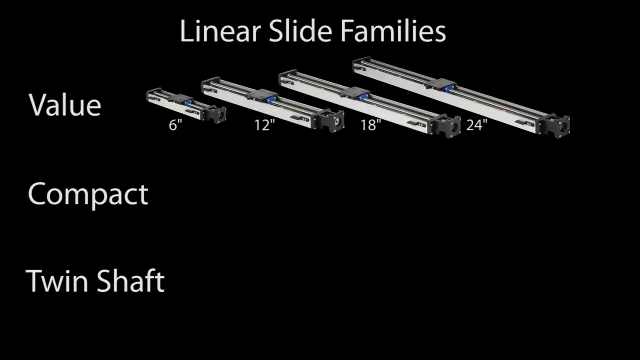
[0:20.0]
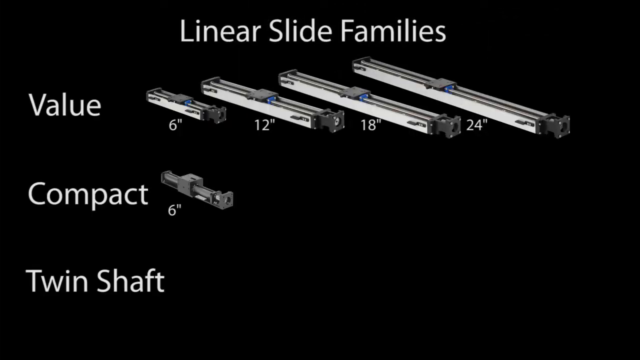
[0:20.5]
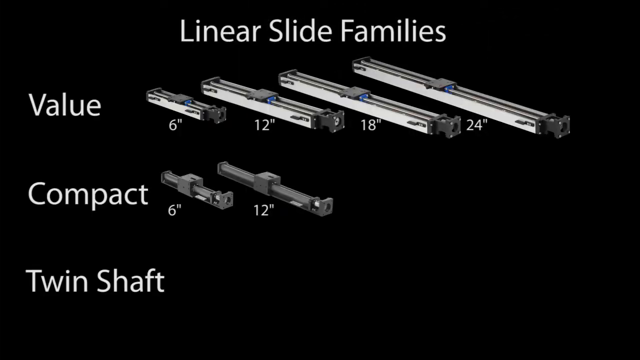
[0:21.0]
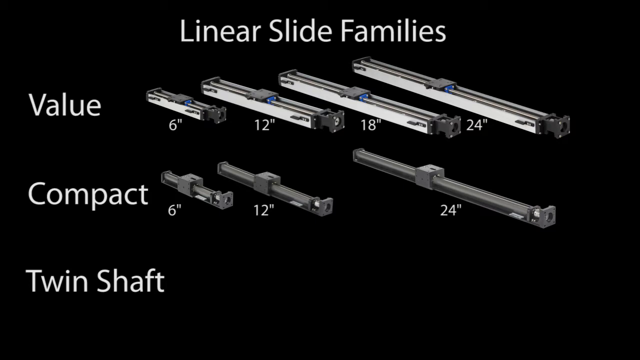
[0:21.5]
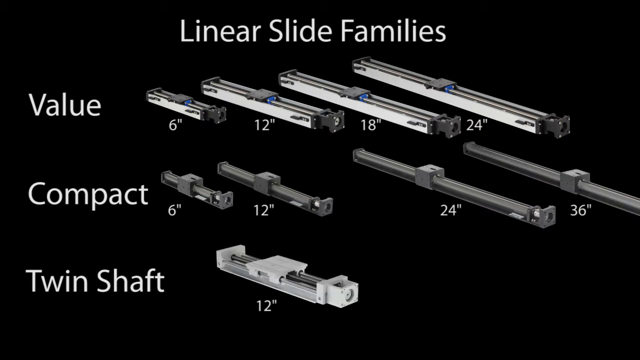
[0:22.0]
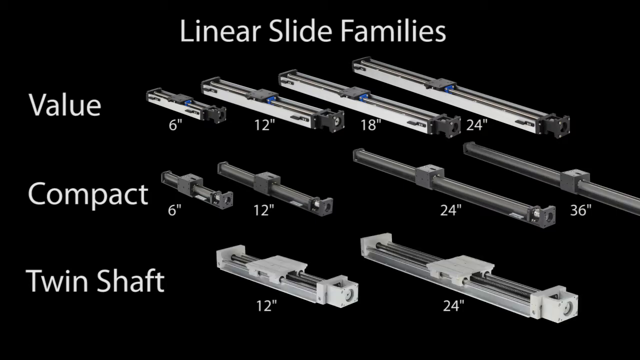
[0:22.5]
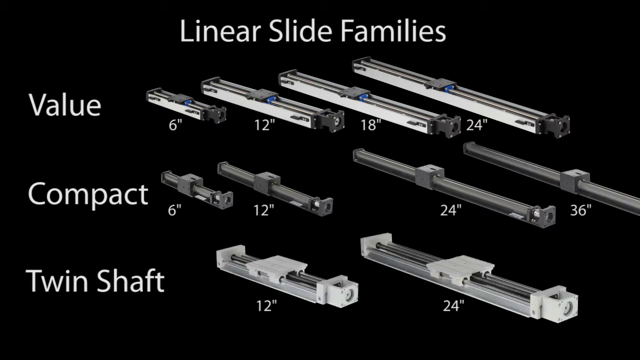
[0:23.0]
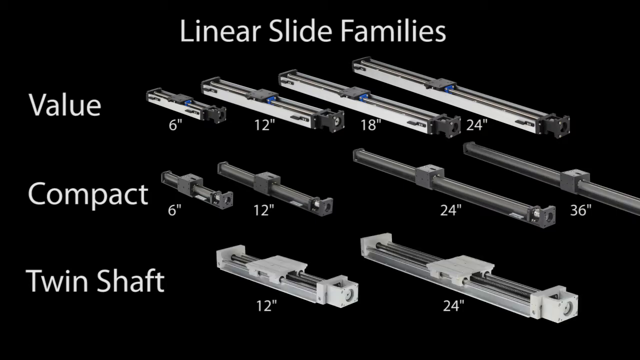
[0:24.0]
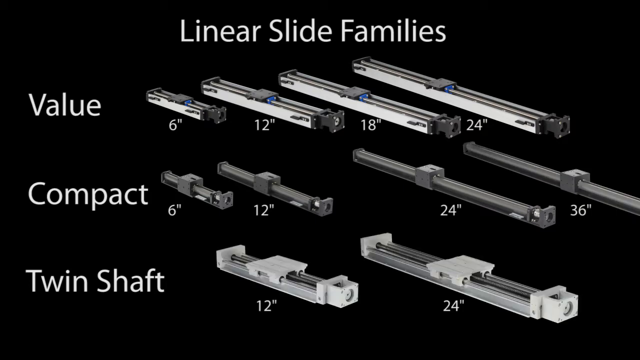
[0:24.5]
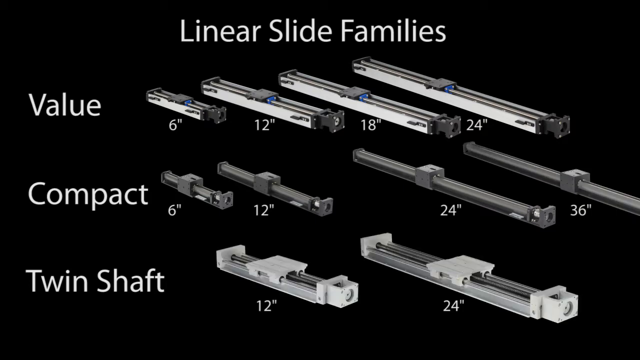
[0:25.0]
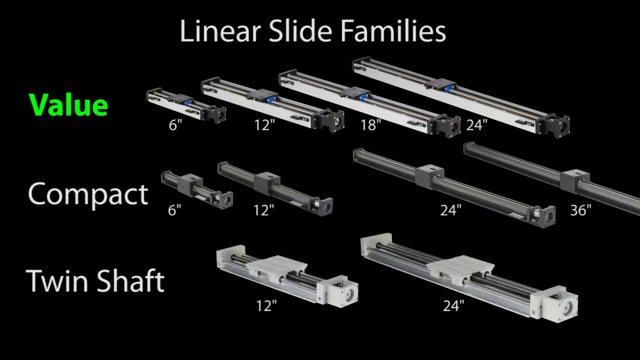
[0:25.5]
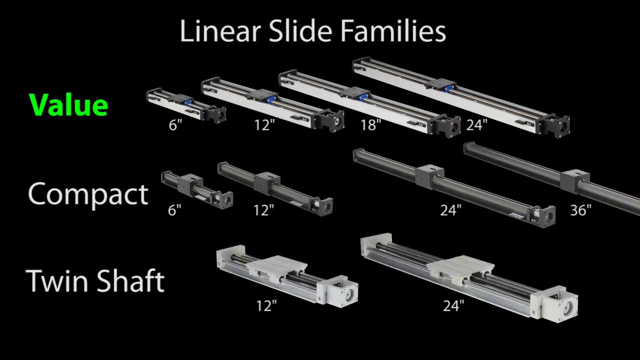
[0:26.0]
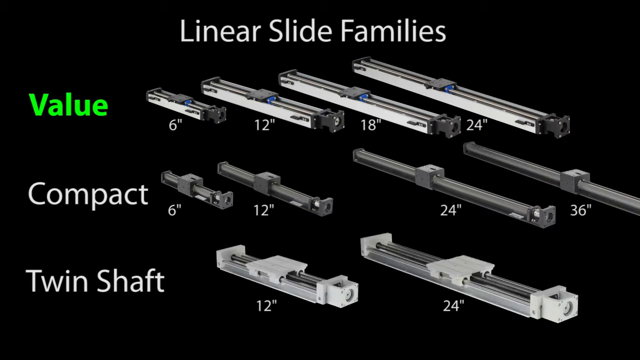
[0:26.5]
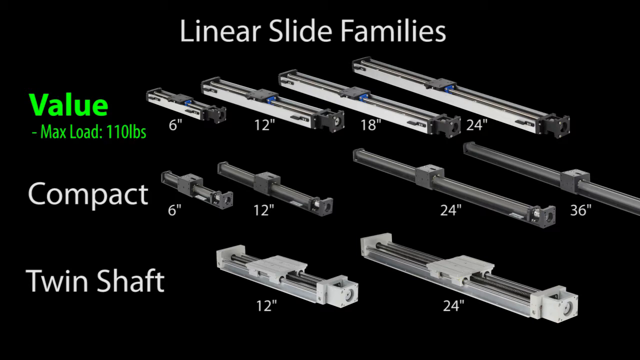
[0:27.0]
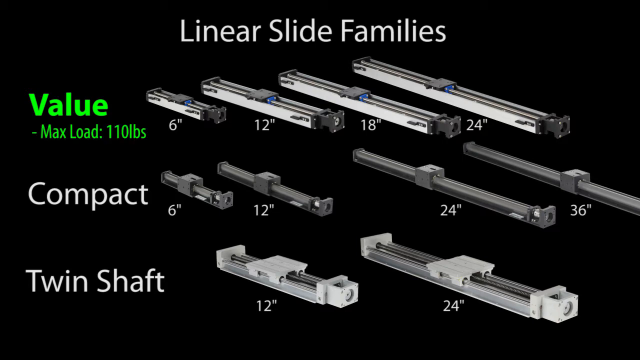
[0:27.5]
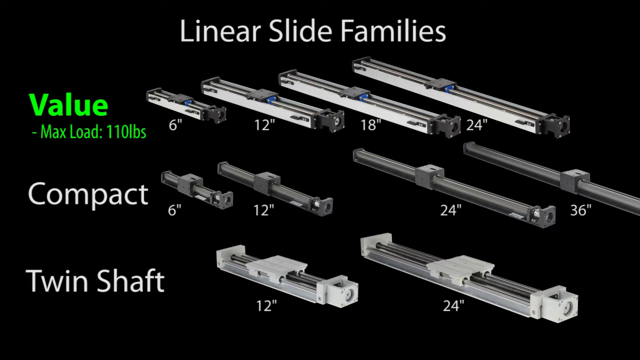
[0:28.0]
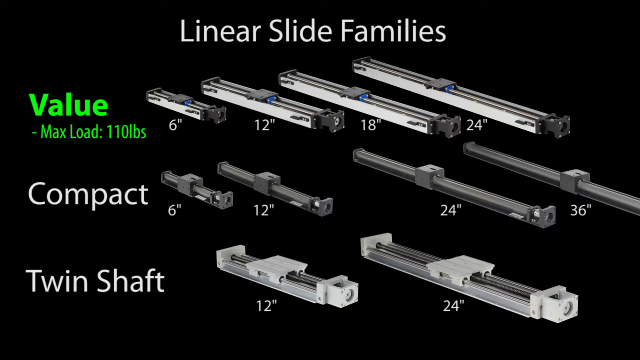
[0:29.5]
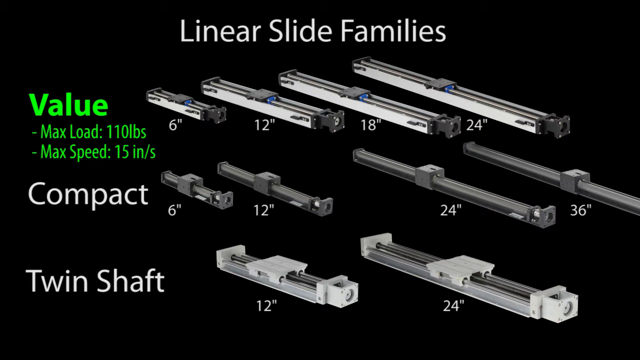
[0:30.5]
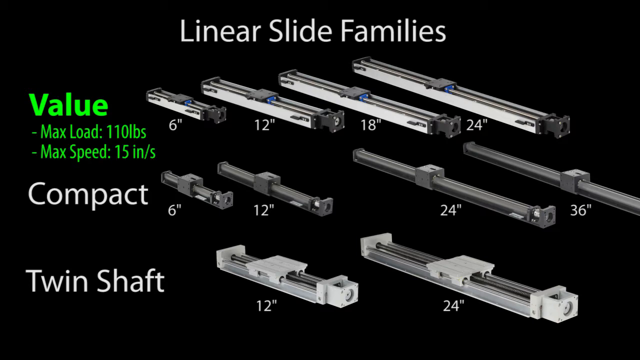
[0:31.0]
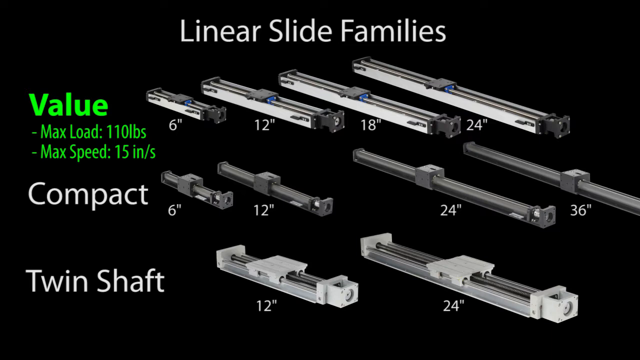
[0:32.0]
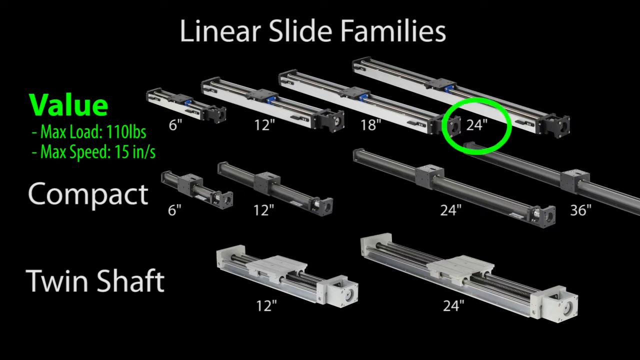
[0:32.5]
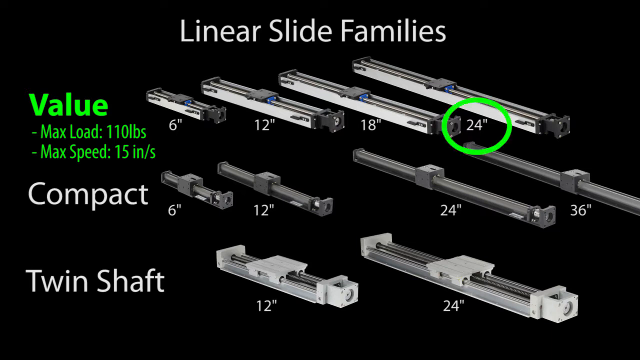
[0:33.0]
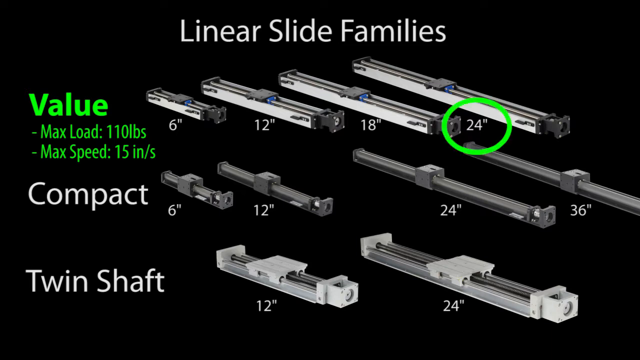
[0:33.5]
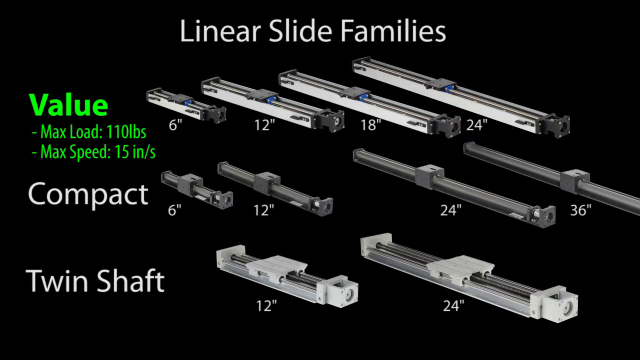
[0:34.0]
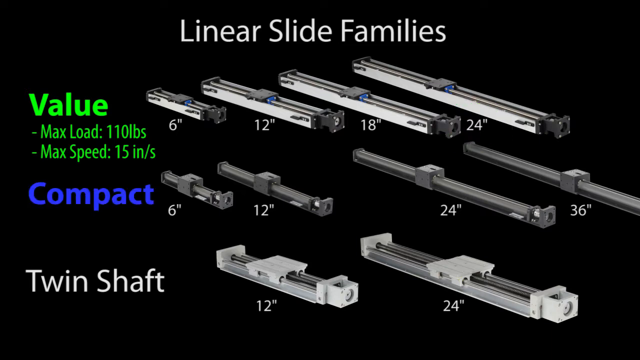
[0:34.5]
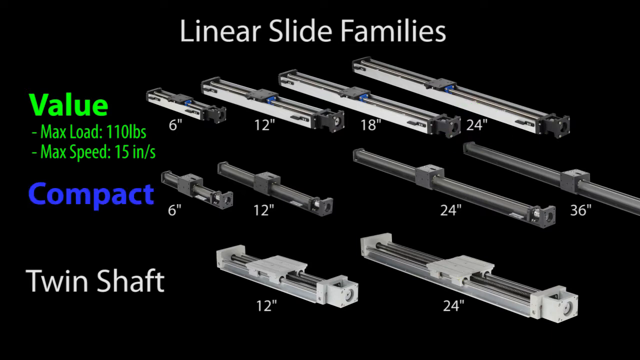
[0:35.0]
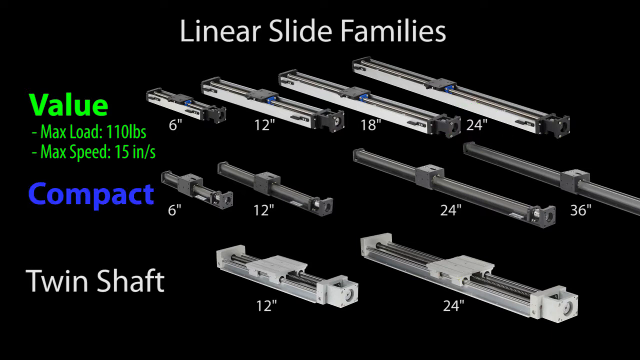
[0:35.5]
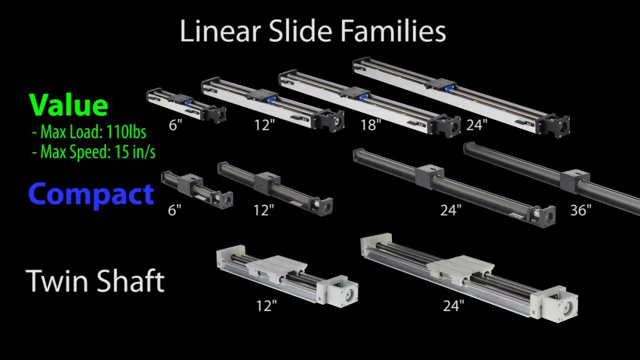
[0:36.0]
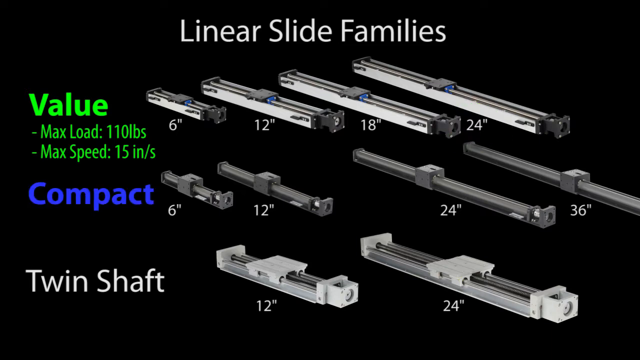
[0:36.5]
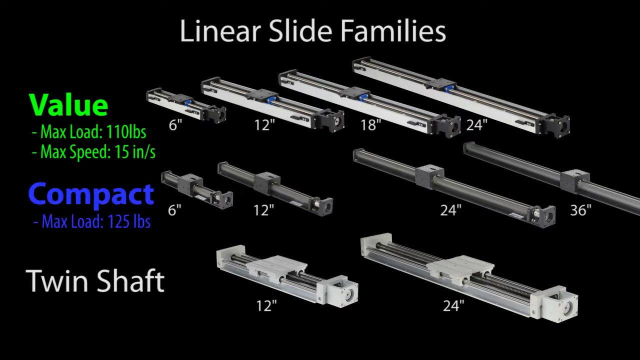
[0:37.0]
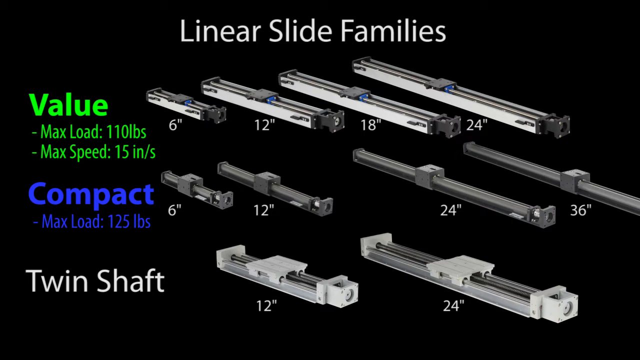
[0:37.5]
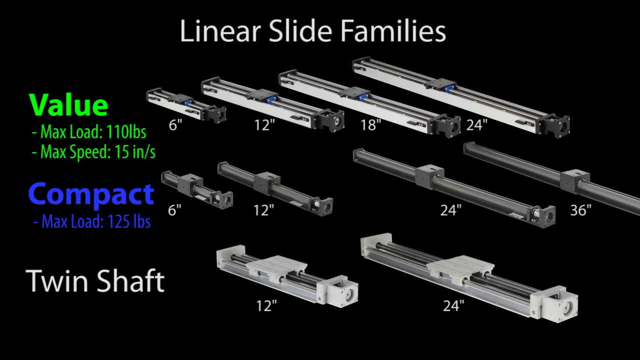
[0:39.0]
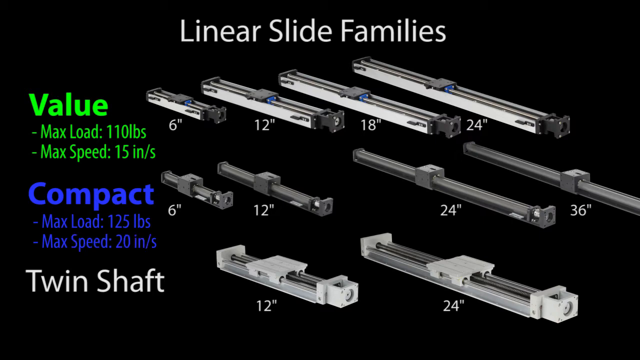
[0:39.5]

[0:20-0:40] A number of linear slides are shown, sorted into categories including value, compact and twin shaft, with twin shaft versus single shaft also shown. Lengths such as 6 inches, 12 and 18.4 are listed. The background is pushed back to highlight the real-world slides as they move.